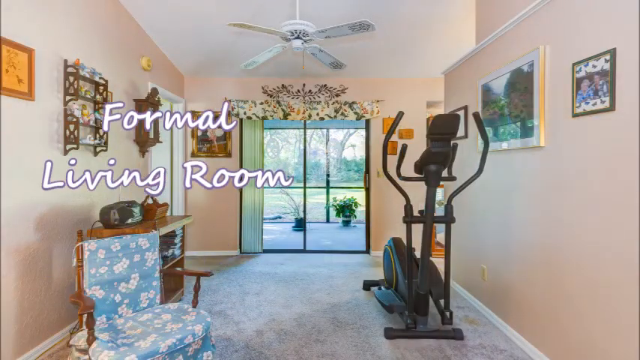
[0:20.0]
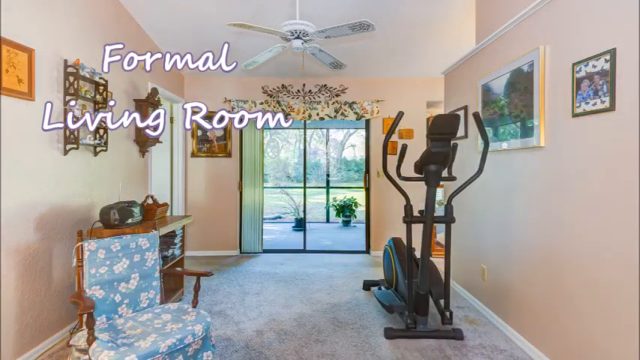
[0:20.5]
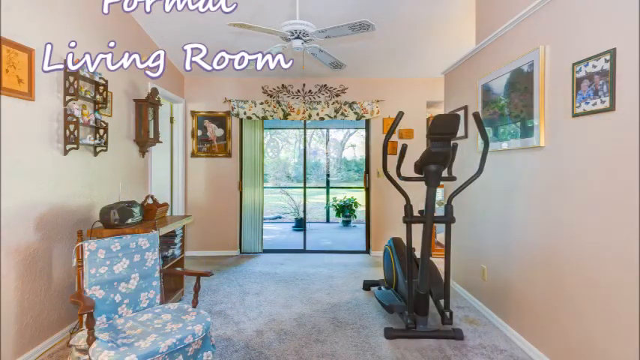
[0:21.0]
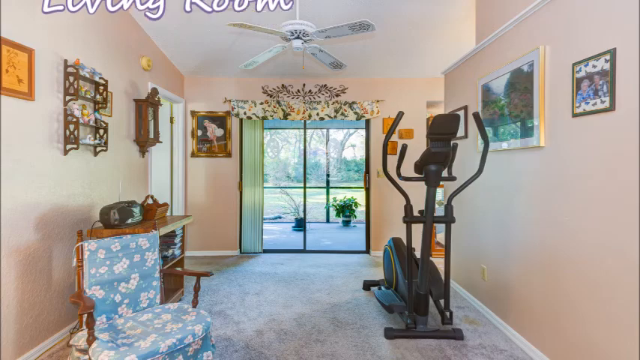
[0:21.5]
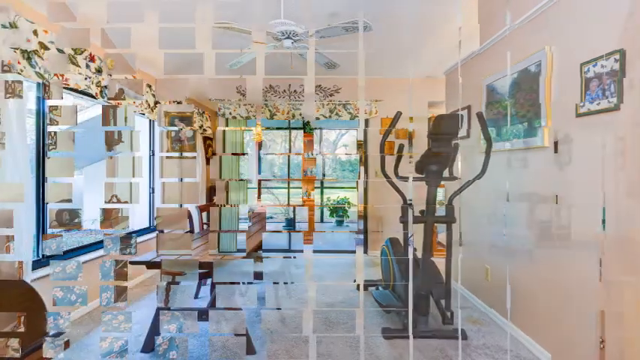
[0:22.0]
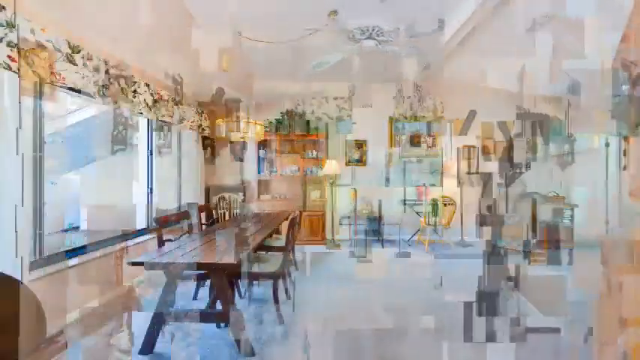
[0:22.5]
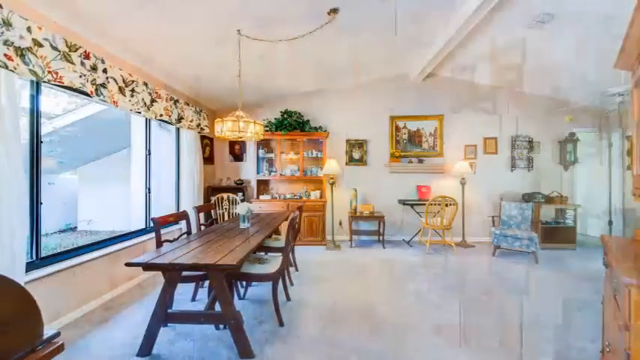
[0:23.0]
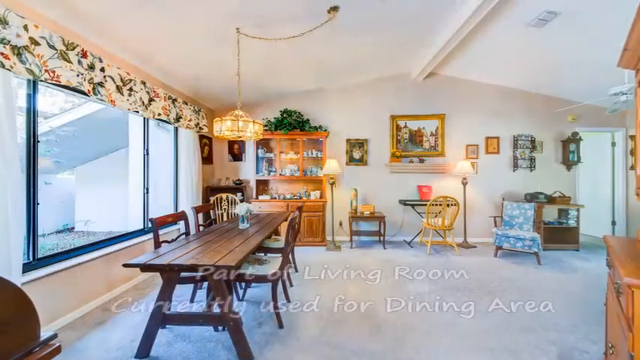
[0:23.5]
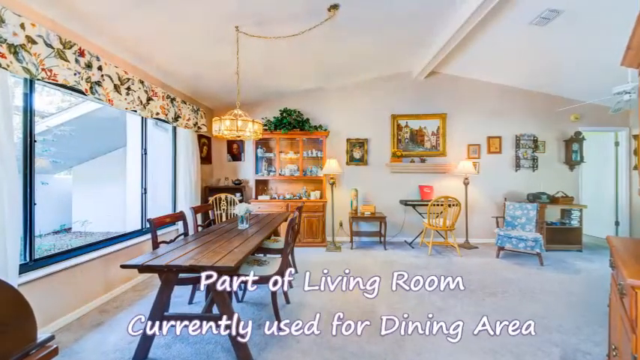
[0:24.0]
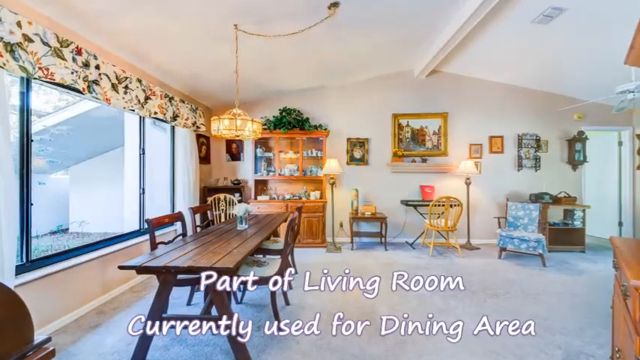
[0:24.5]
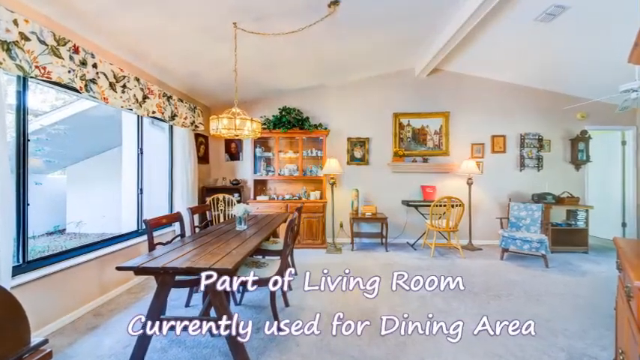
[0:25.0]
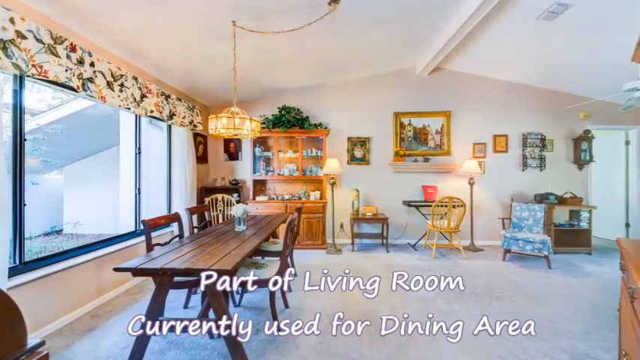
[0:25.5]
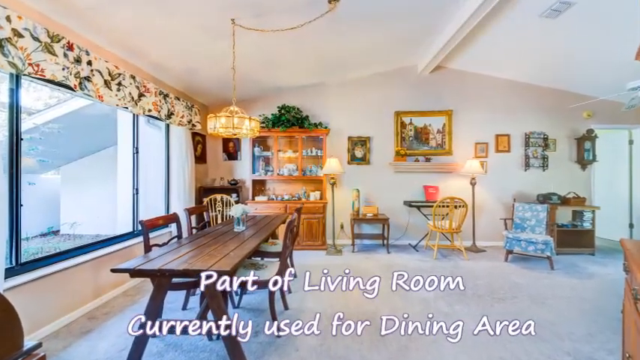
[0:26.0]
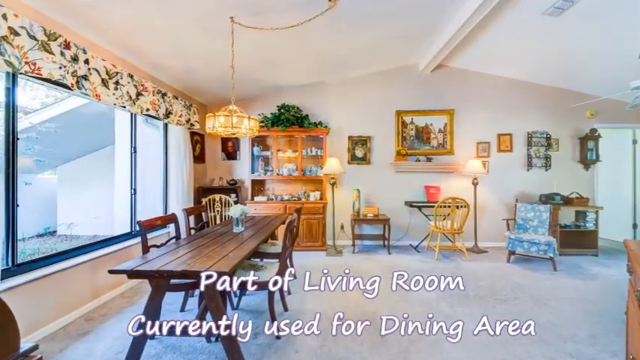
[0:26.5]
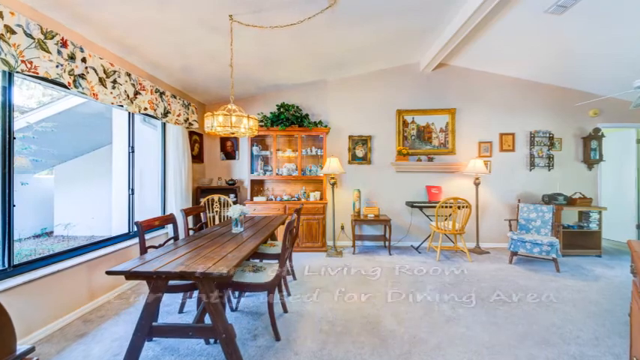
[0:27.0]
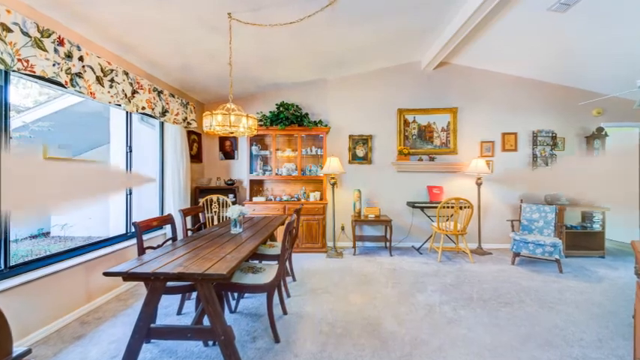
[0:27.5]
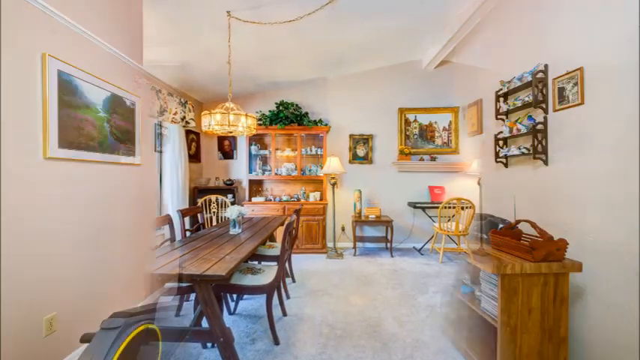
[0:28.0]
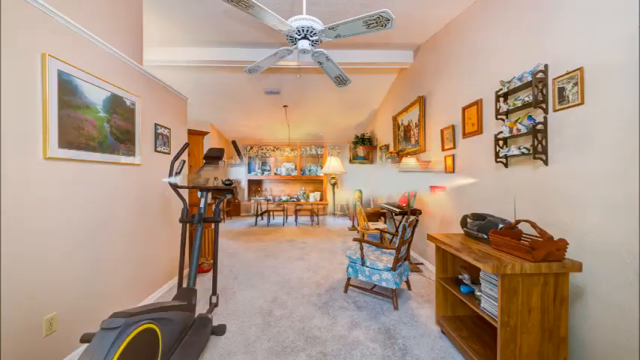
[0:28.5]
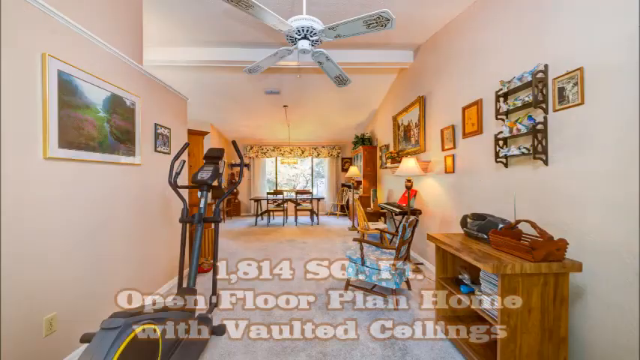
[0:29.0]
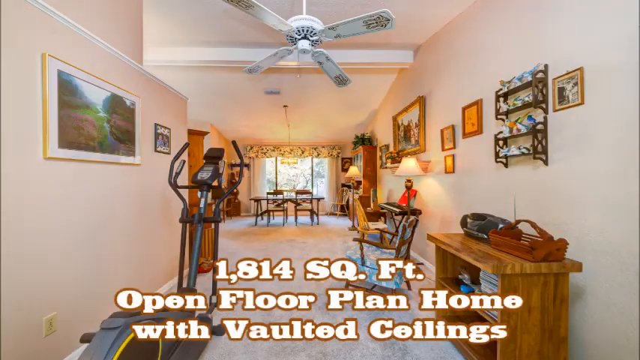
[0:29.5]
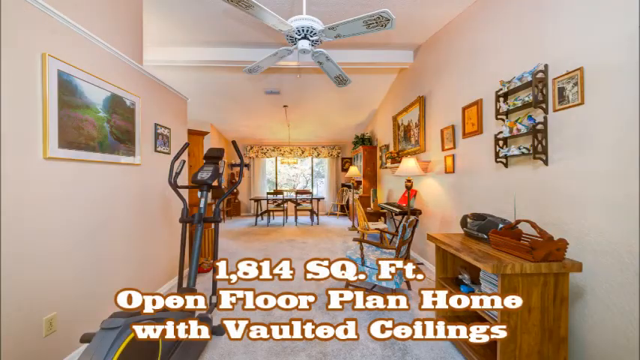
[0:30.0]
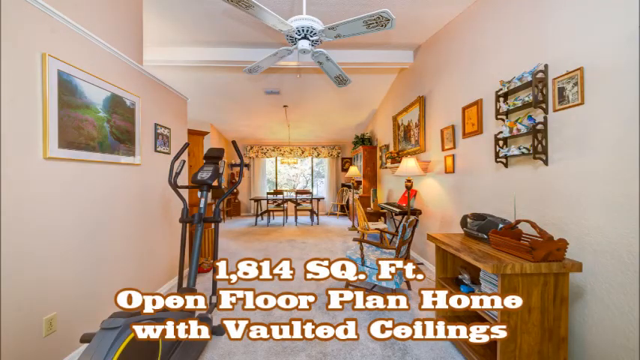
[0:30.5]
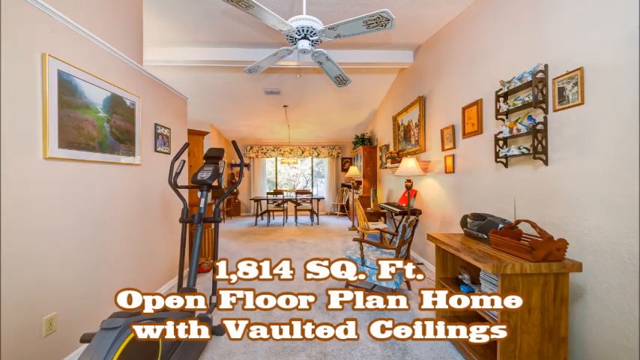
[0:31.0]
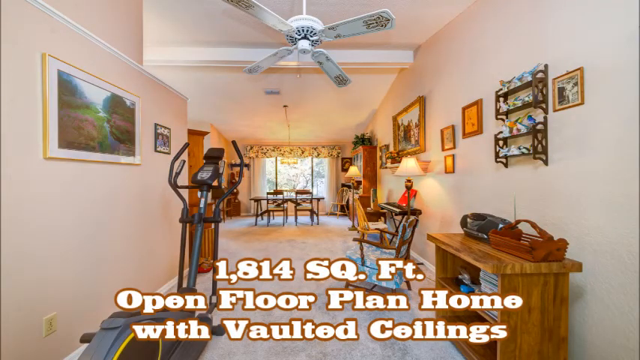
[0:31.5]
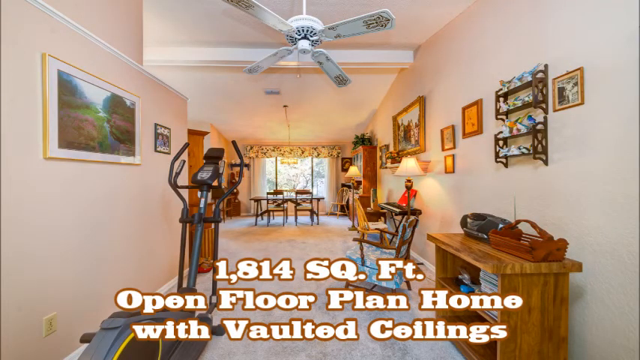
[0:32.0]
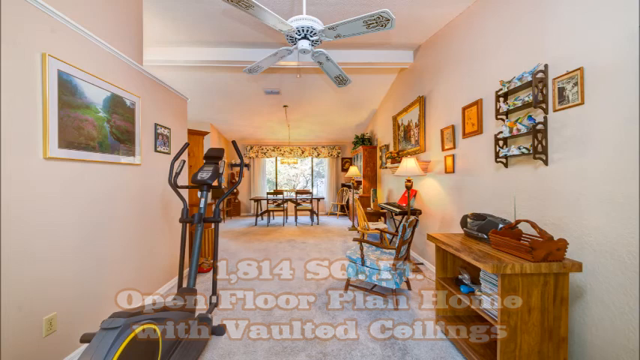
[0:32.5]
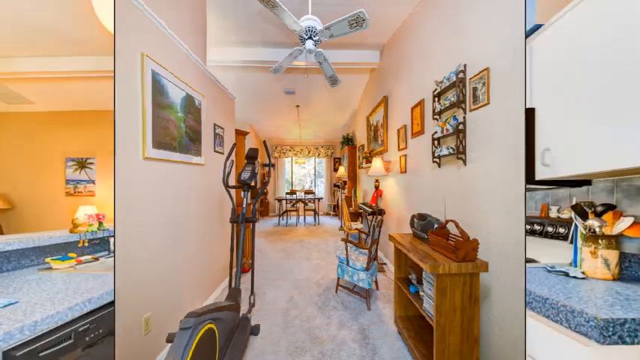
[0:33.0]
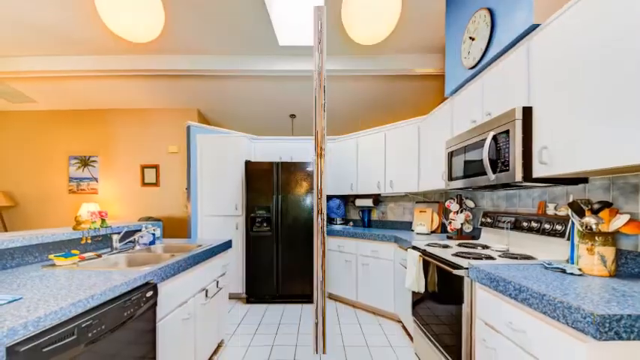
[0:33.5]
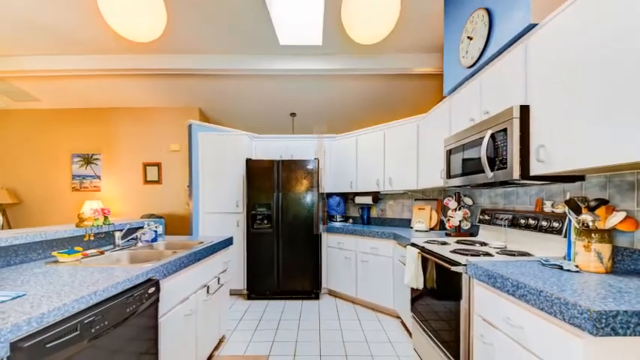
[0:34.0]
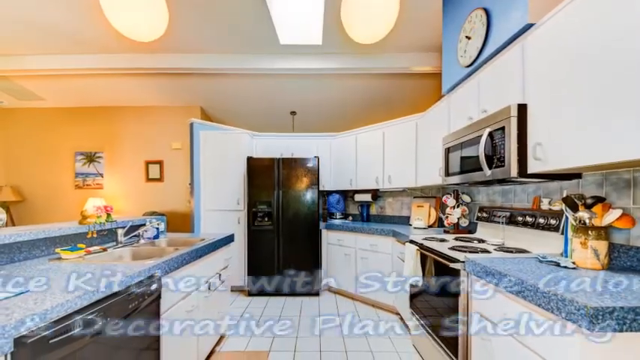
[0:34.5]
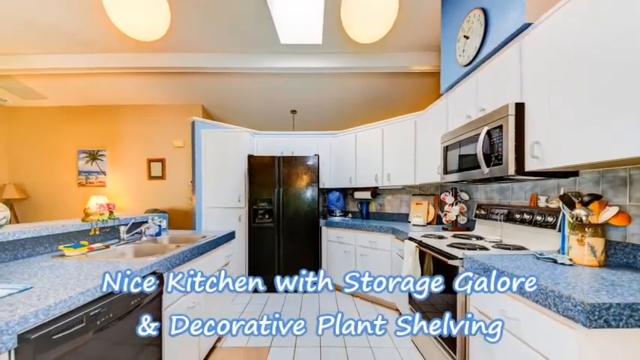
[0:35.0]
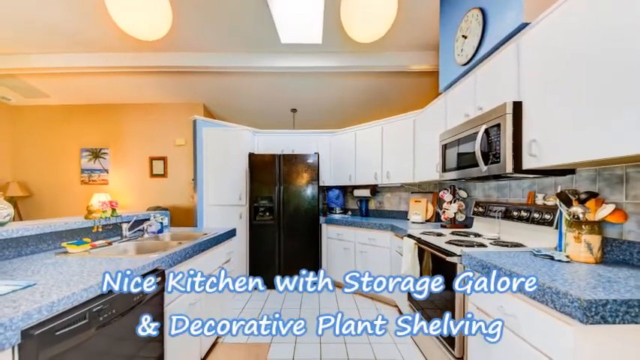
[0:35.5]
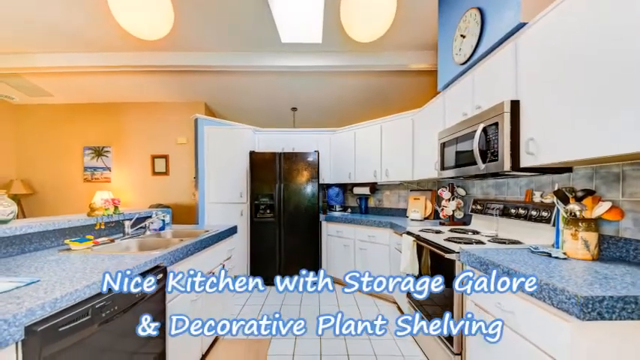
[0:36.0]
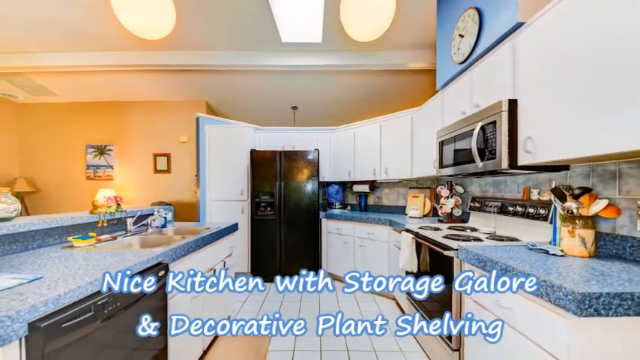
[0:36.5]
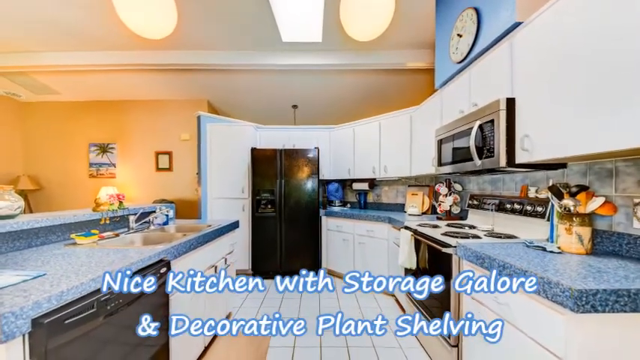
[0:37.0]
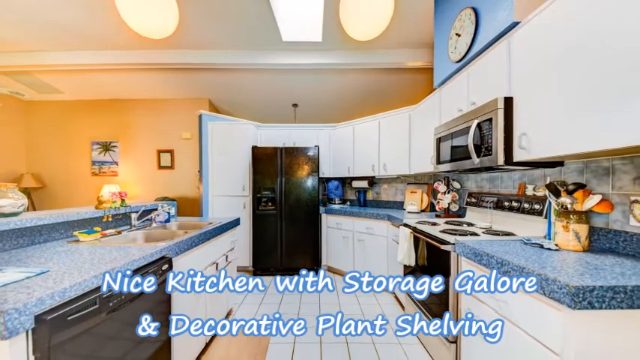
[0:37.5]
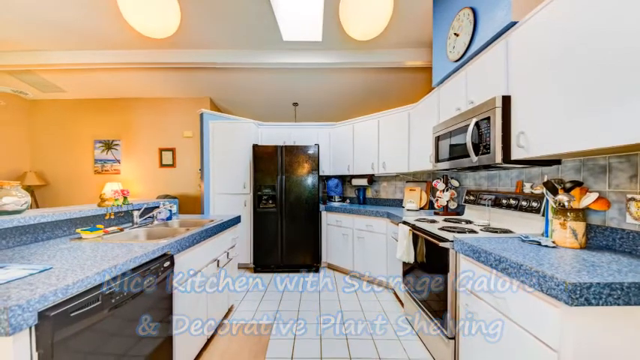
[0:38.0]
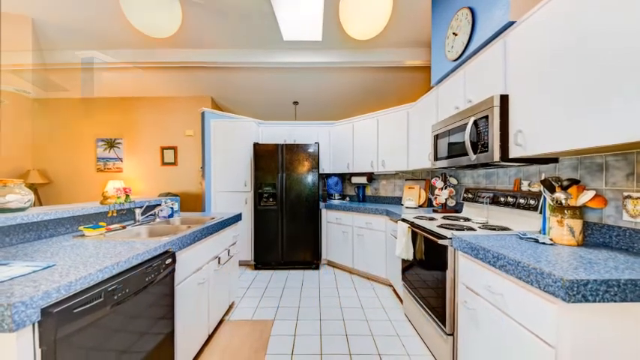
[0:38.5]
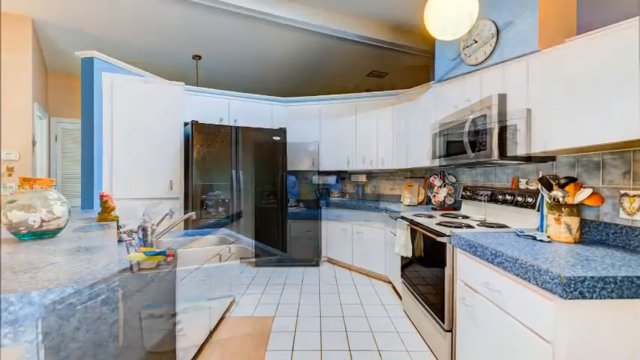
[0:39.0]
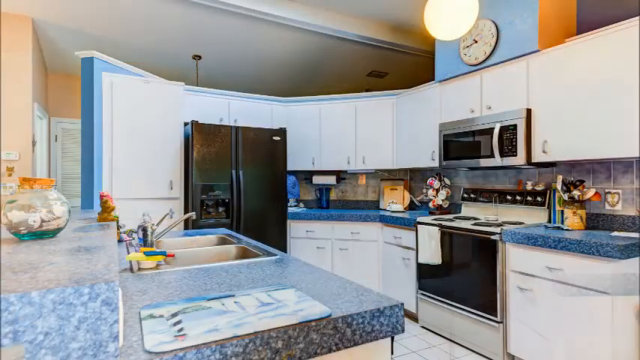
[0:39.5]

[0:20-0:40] The formal living room has a ceiling fan, some pictures on the wall, a chair, what looks like some shelves, and an elliptical that has been put into the space. A clock hangs on the wall. The view pans to part of the living room that is currently used as a dining area, and text reads "1814 square foot open floor plan home with vaulted ceilings." The video then shows the kitchen, with text mentioning "storage galore and decorative plant shelving." The counters are kind of a blue color, with a lighter blue-gray backsplash. The refrigerator and the stove are black on the front; the top of the stove is white and looks like it has electric coils. A silver-colored microwave is above the stove, and a clock is above the microwave area. Typical kitchen utensils are on the counters, the cabinets throughout the kitchen are very white, and the kitchen floor is white tile.